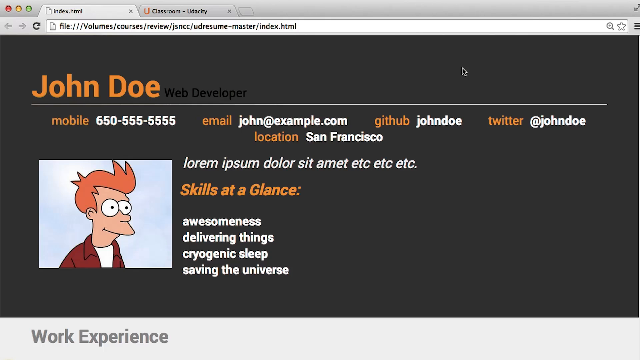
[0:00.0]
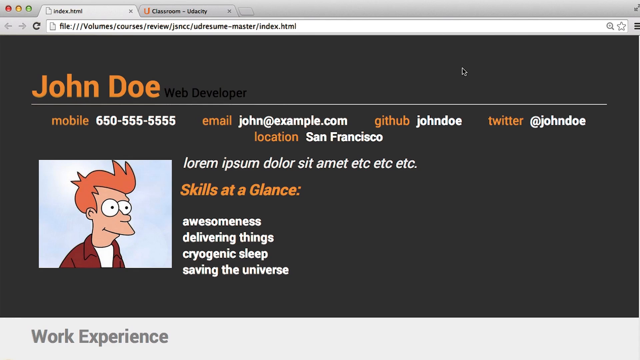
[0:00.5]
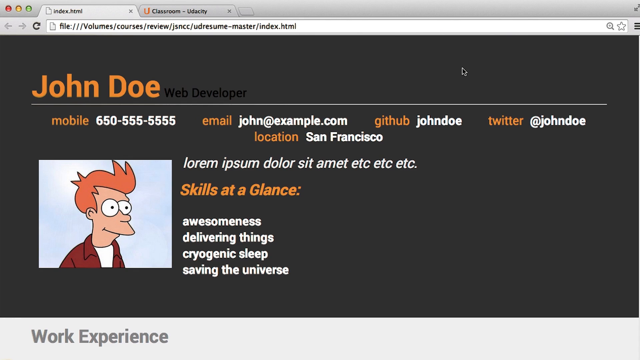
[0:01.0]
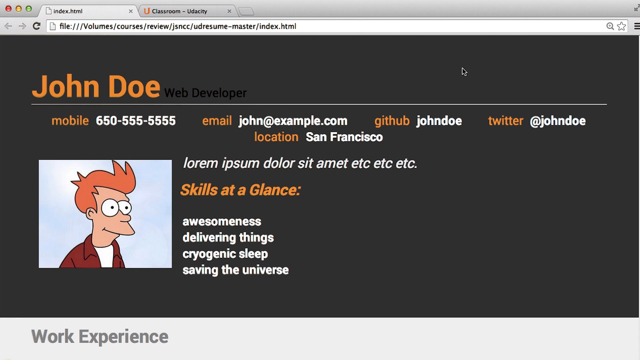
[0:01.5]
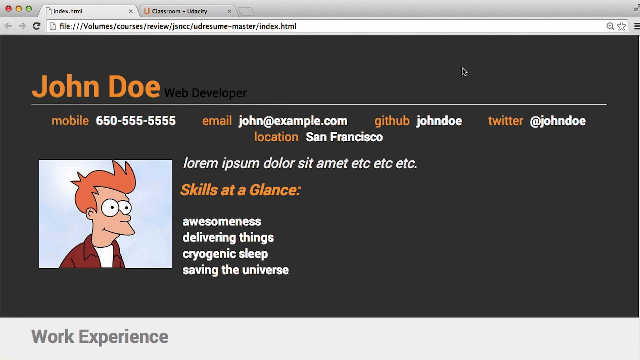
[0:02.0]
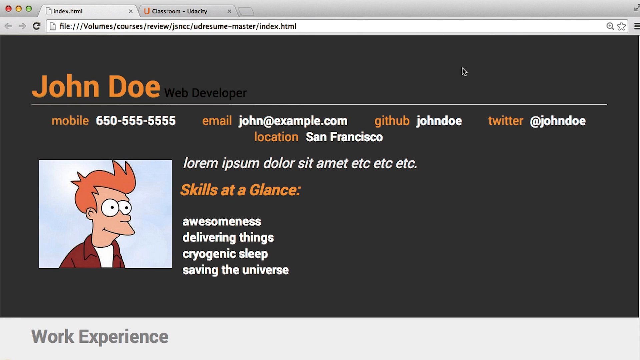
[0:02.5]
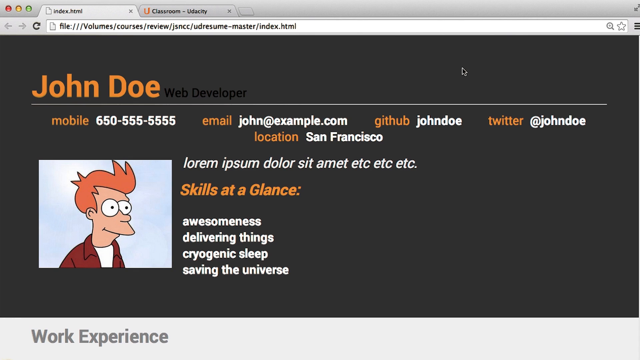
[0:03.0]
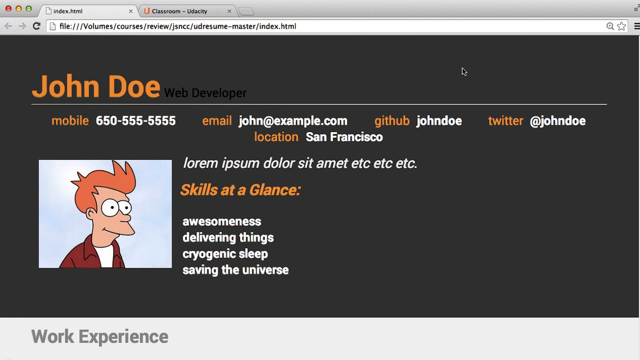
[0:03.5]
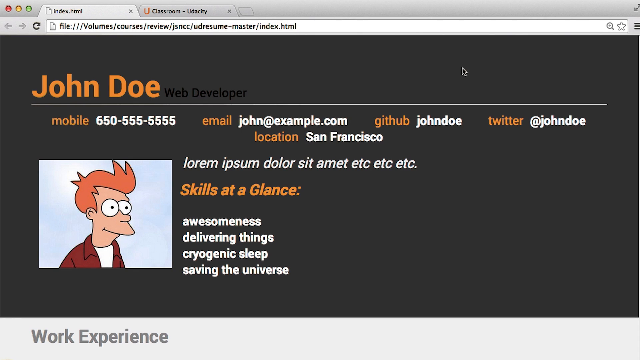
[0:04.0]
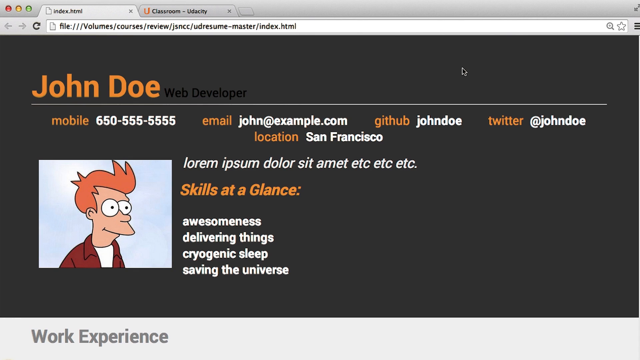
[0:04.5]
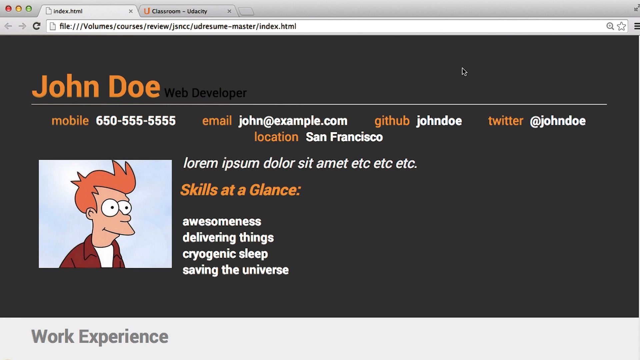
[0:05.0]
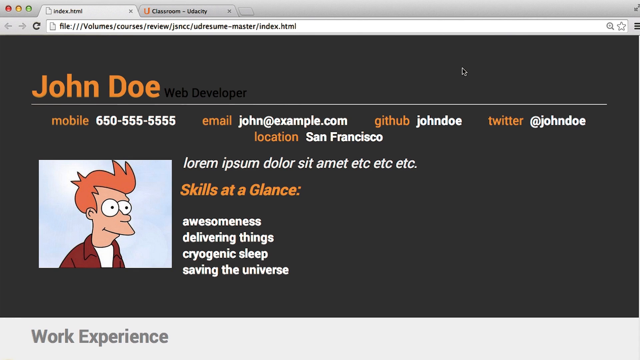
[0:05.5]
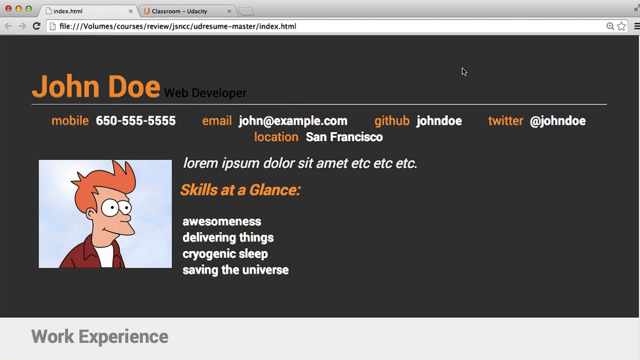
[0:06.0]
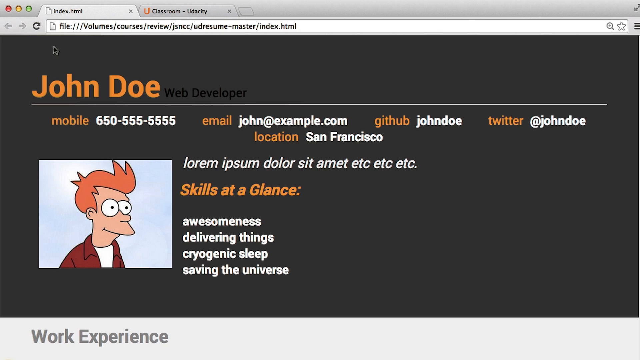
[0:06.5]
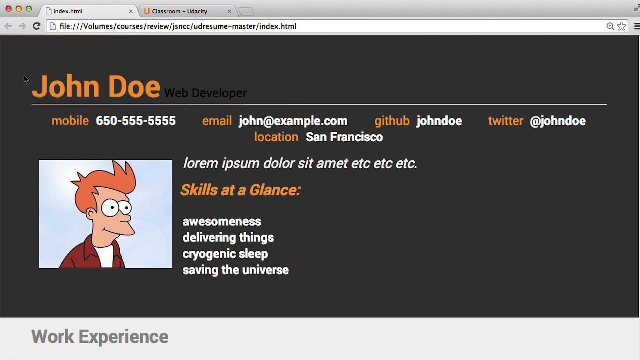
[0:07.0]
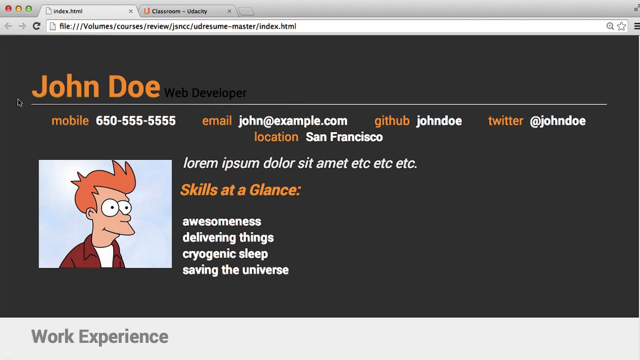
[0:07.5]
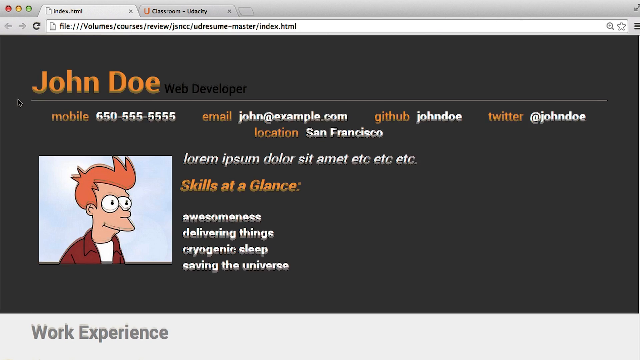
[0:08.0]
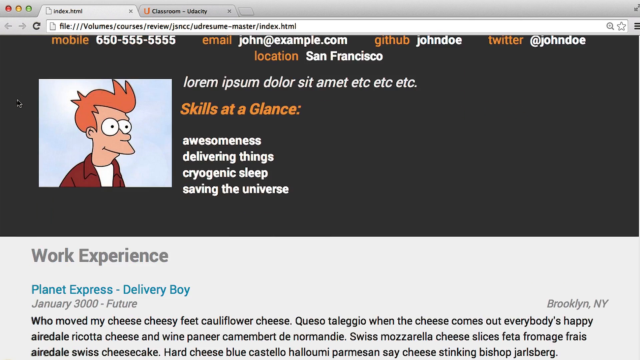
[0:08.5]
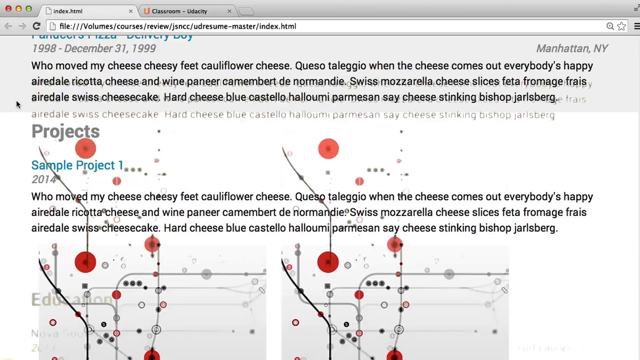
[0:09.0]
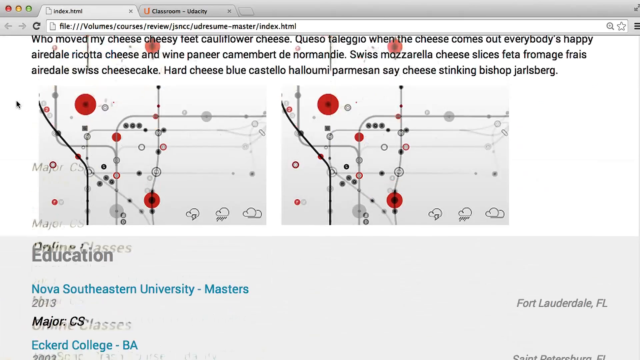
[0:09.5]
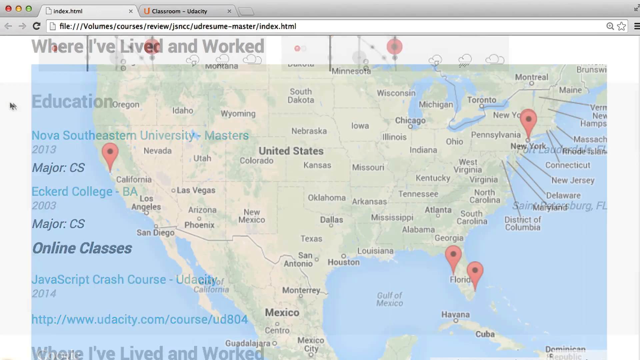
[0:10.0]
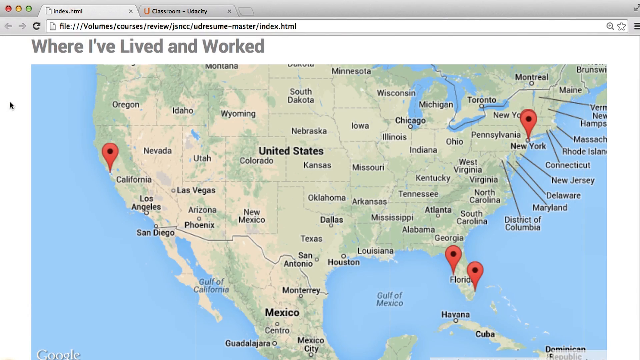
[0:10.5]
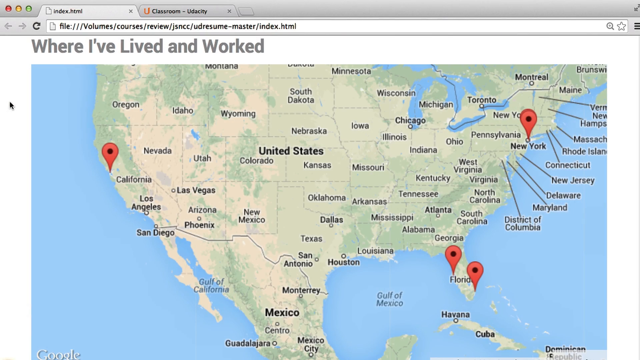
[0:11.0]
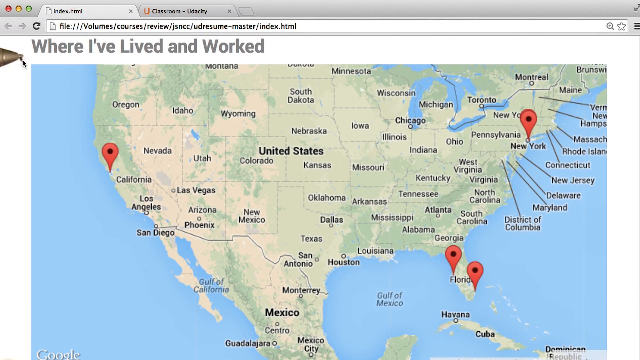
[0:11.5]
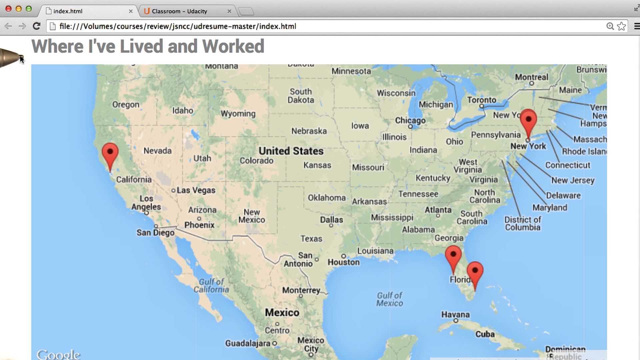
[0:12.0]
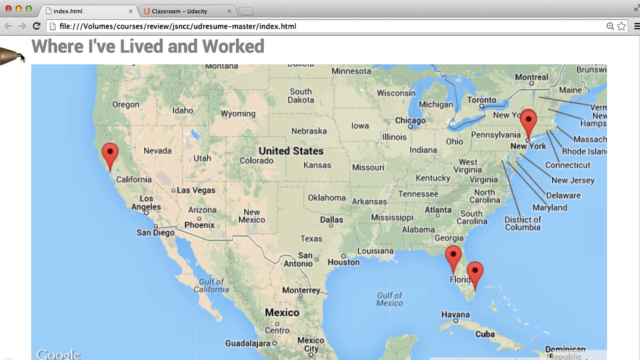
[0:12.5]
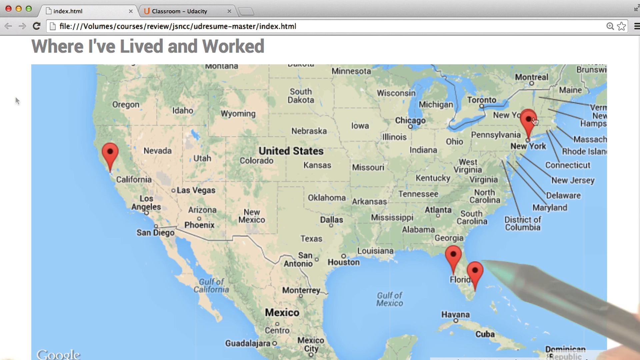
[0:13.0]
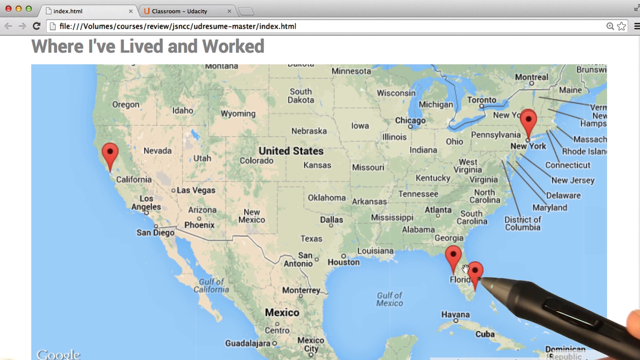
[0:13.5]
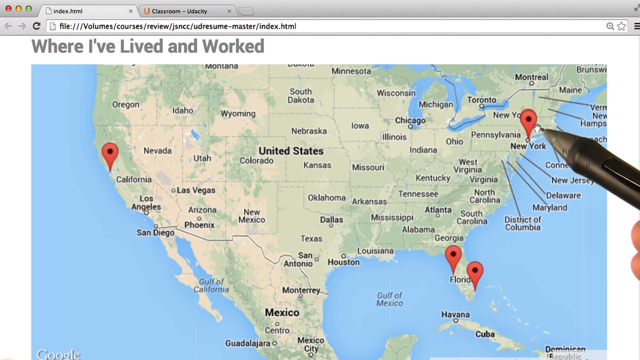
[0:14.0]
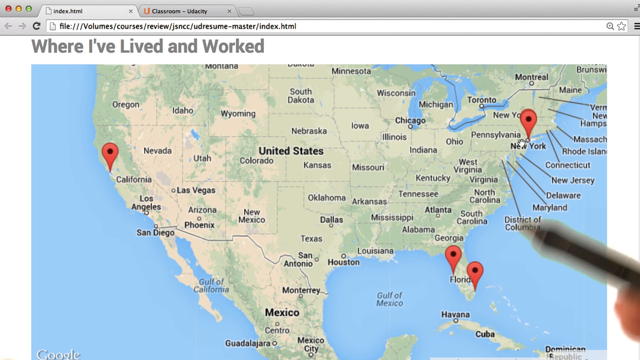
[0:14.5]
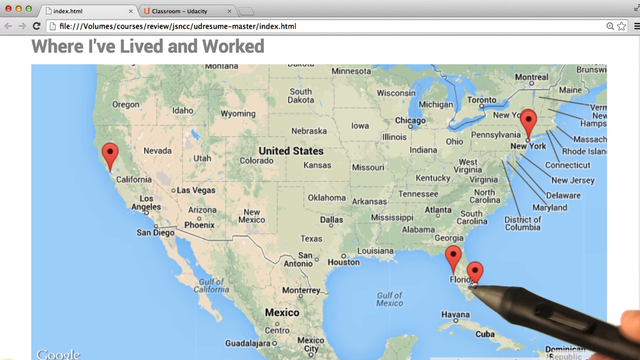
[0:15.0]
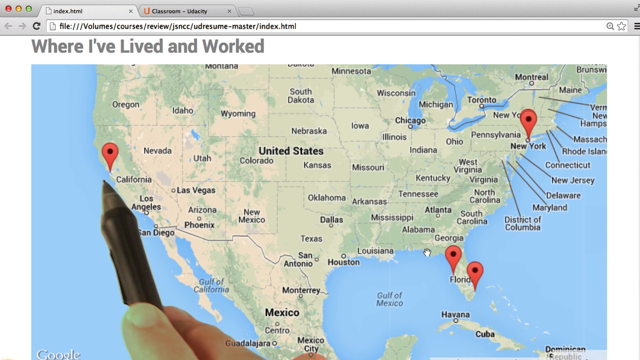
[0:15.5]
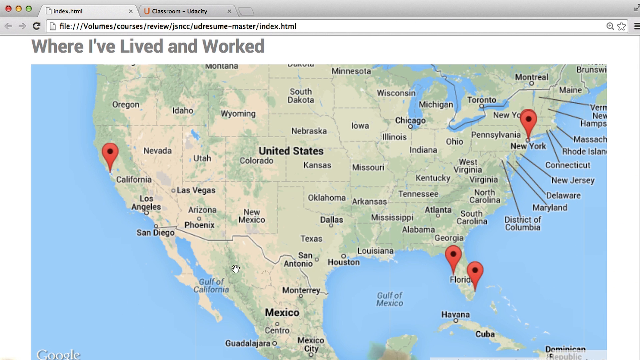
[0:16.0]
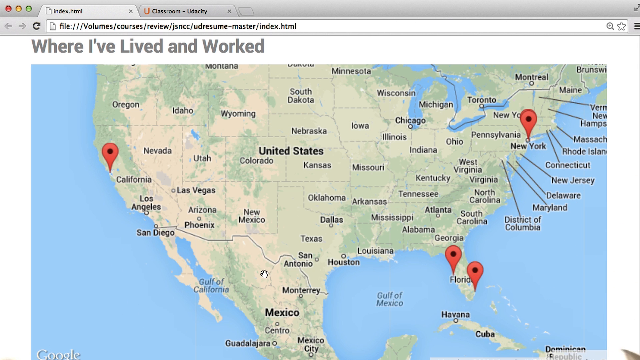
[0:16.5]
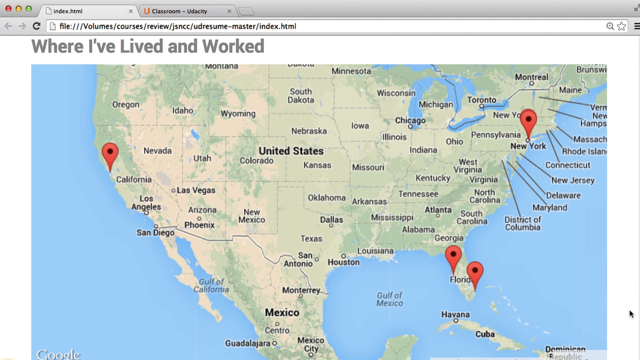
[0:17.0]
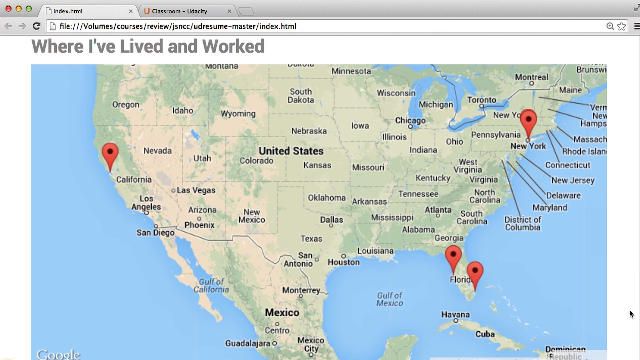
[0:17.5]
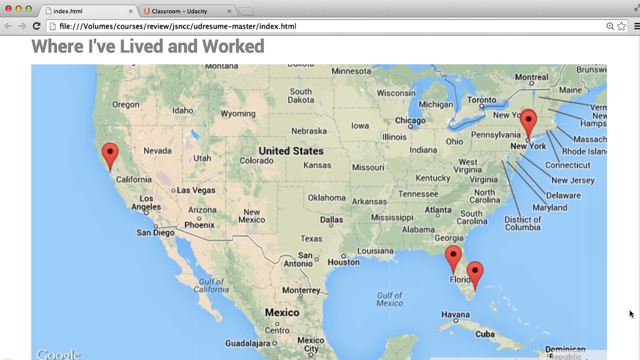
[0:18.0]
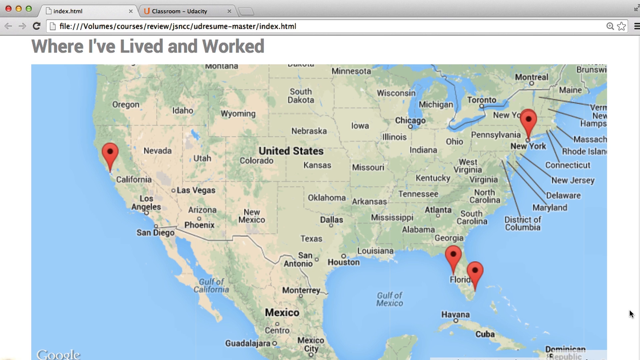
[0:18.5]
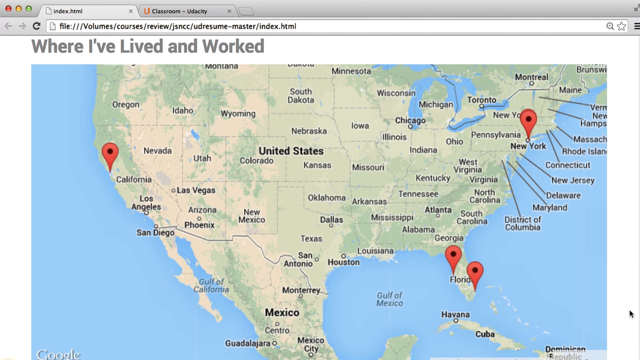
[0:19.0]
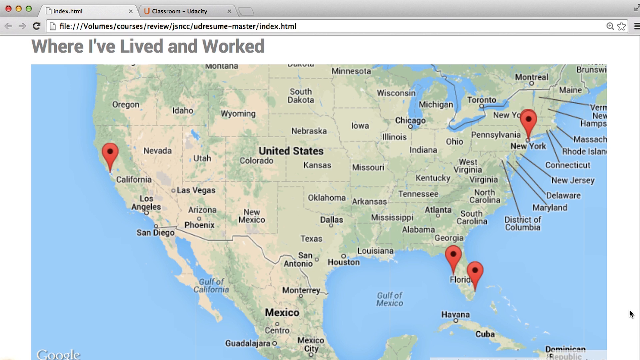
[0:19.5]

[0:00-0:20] A gray computer screen has two windows open. The text reads "John Doe Web Developer", followed by information that looks made up: mobile, email, Twitter, location, GitHub, and then "skills at a glance". A picture on the left appears to be a character from Futurama. The mouse stays stationary, then finally moves to the left, and the page starts to scroll down to a sample project with kind of random references to food, primarily different types of cheeses, with two images below that. It scrolls a little more to an education section with a couple of listings for Florida colleges, ranging from 2003 to 2013. A map of the US then appears with points on New York, Florida and California. A pin moves around, and someone's hand is visible as they move it to various points around the map.